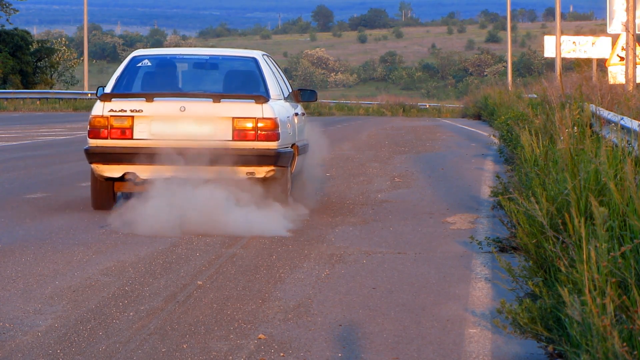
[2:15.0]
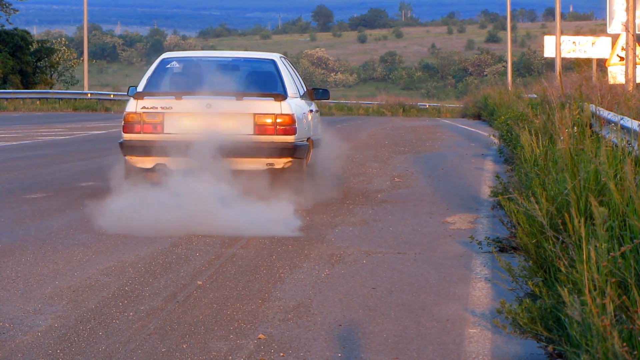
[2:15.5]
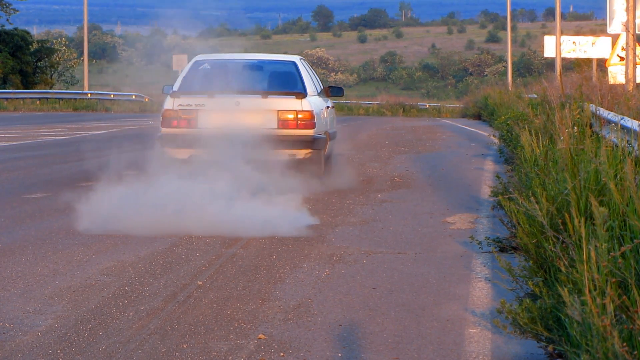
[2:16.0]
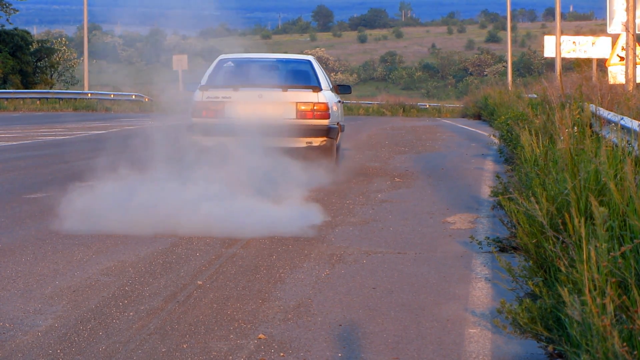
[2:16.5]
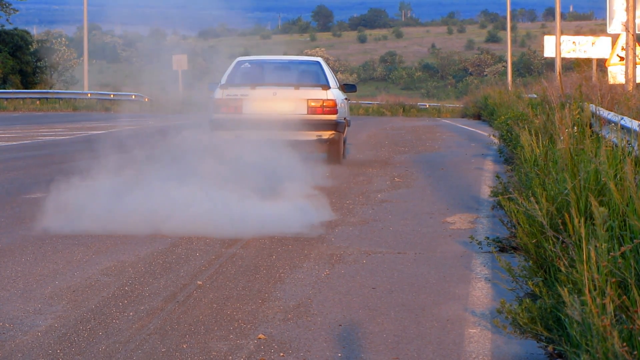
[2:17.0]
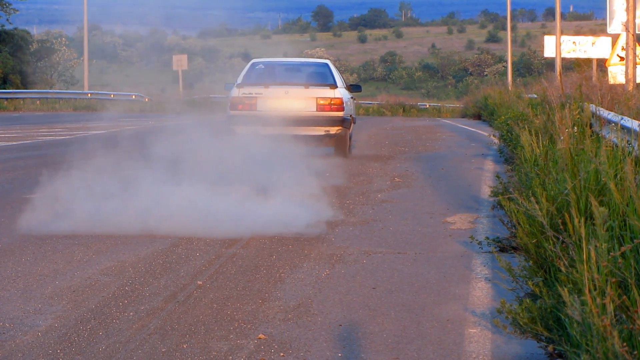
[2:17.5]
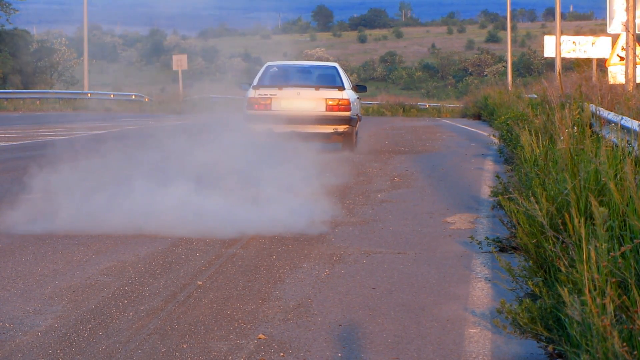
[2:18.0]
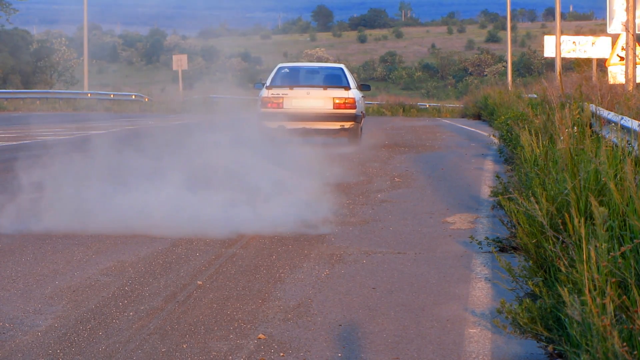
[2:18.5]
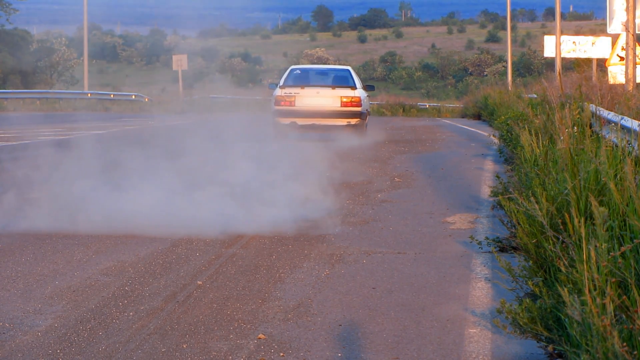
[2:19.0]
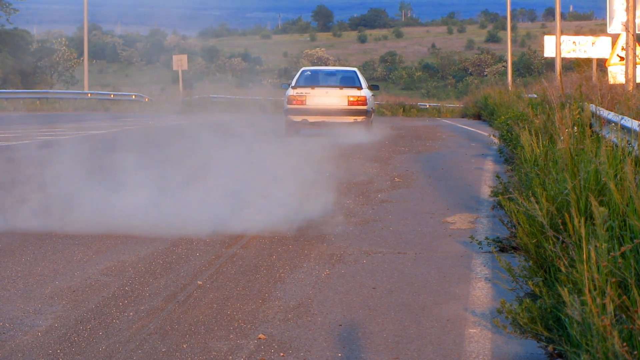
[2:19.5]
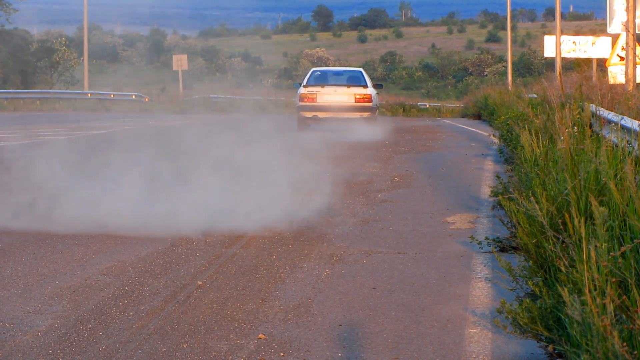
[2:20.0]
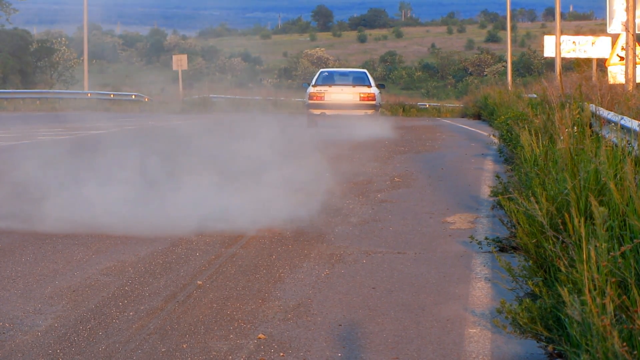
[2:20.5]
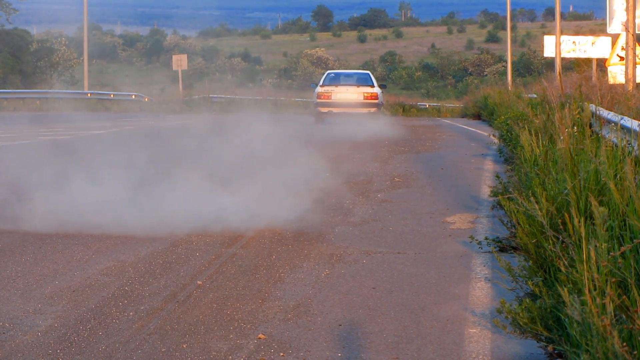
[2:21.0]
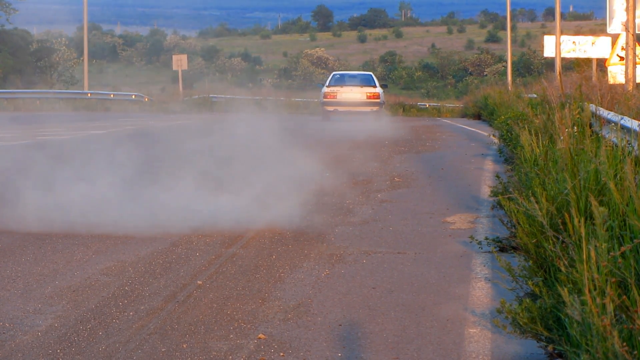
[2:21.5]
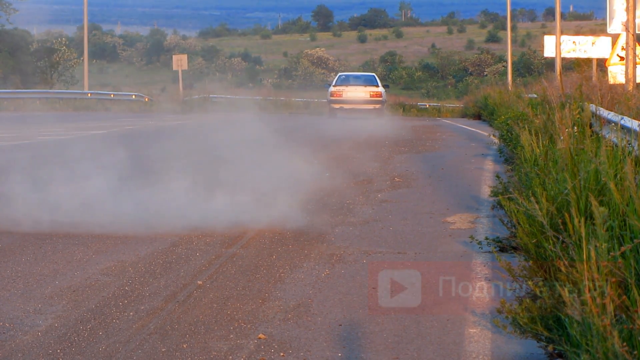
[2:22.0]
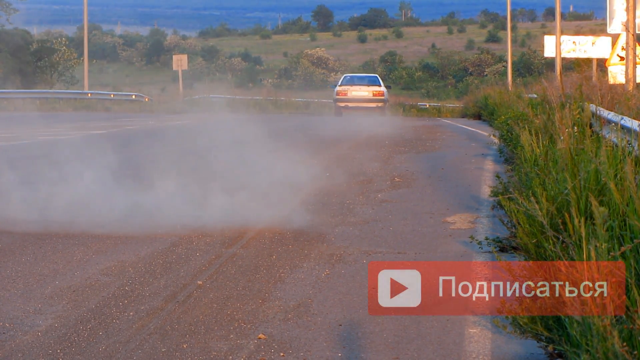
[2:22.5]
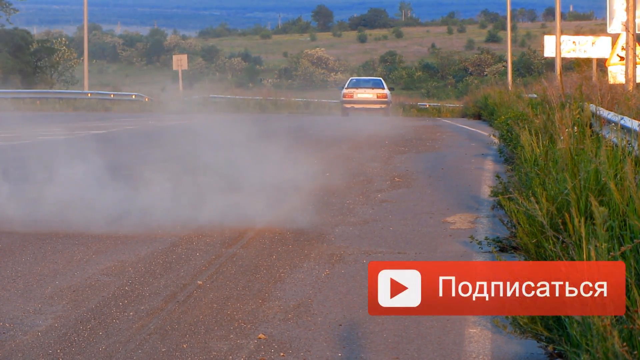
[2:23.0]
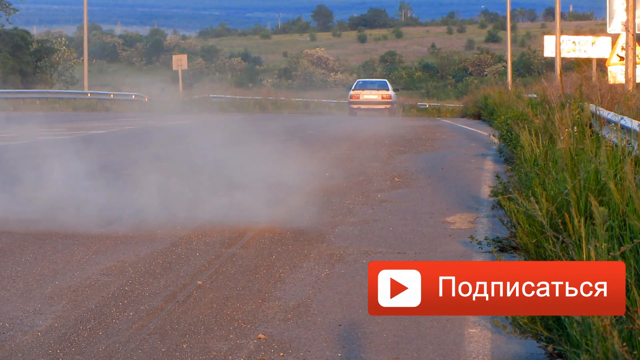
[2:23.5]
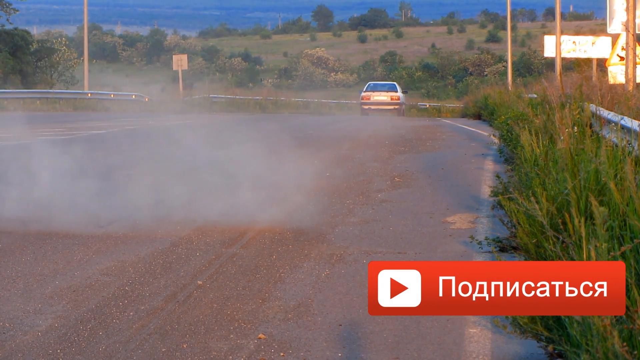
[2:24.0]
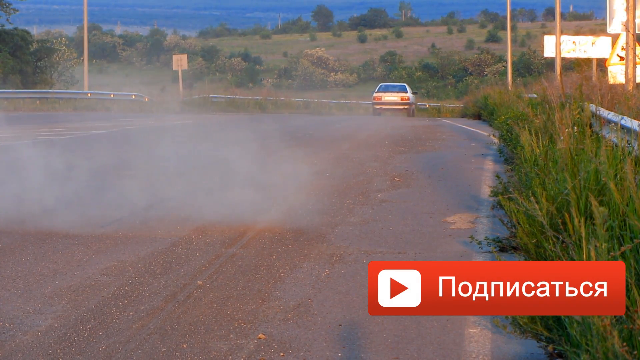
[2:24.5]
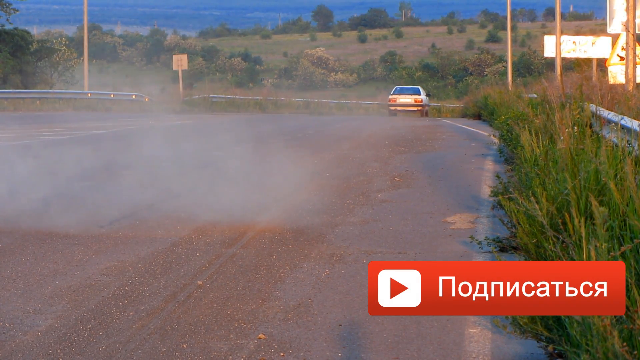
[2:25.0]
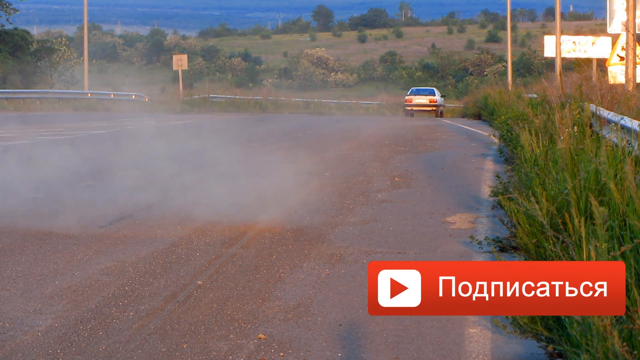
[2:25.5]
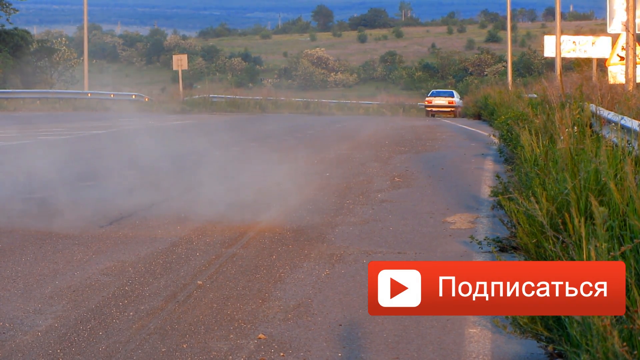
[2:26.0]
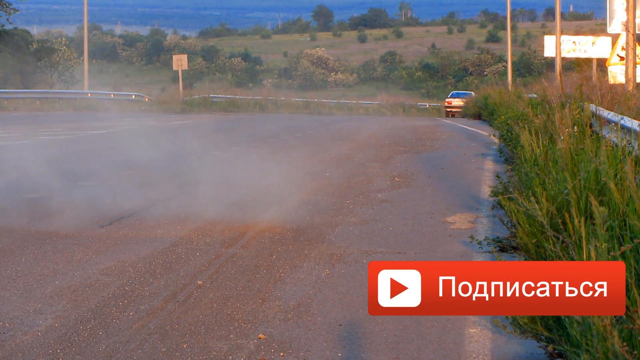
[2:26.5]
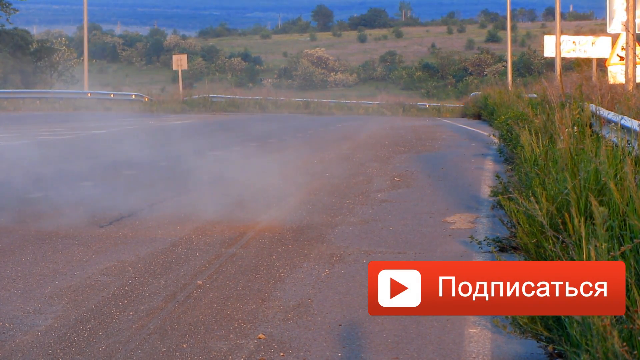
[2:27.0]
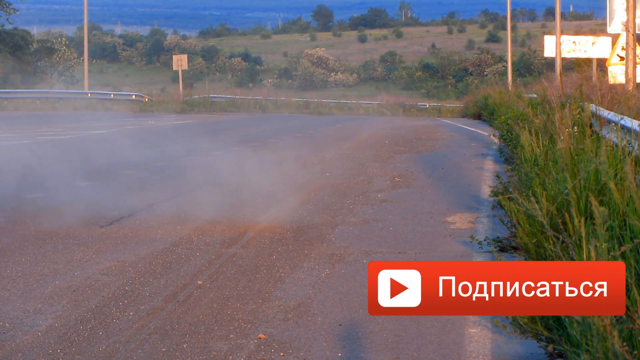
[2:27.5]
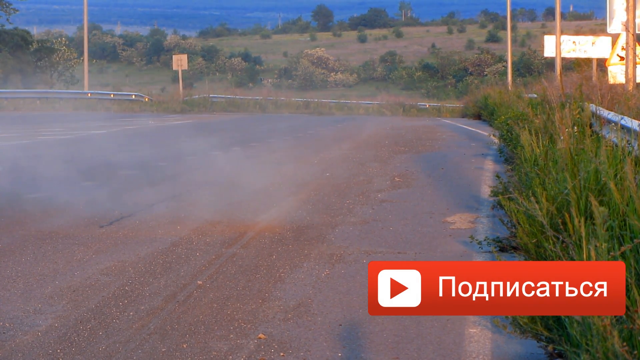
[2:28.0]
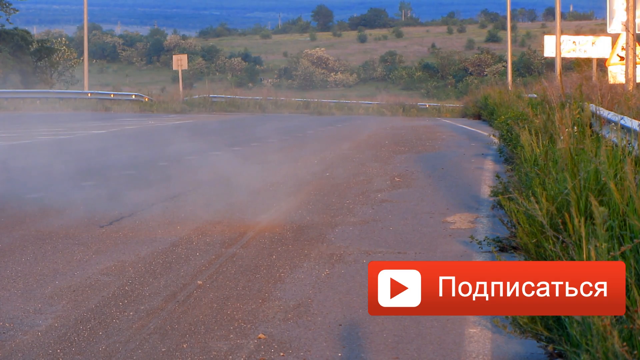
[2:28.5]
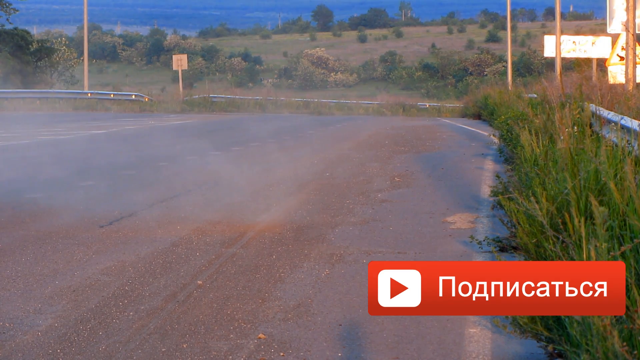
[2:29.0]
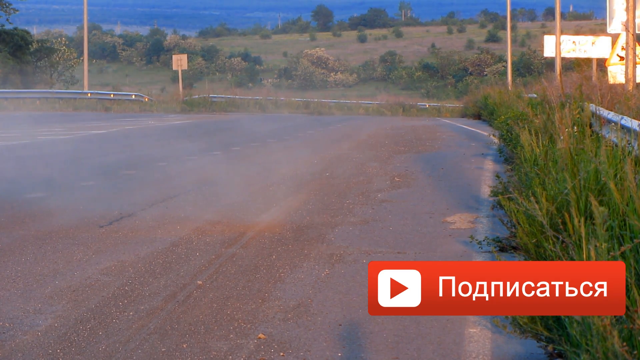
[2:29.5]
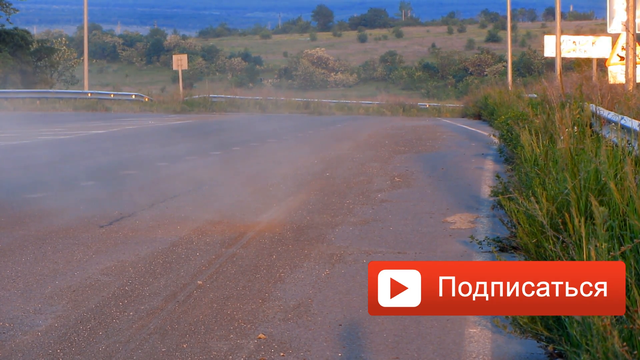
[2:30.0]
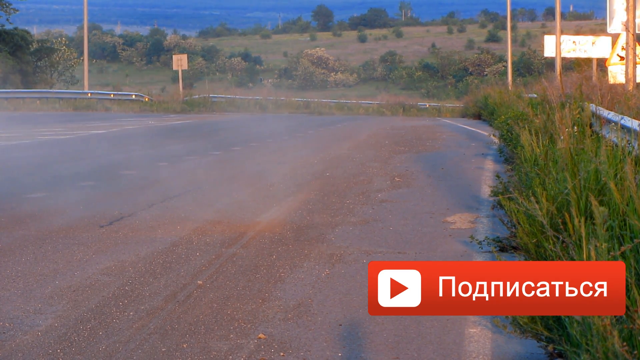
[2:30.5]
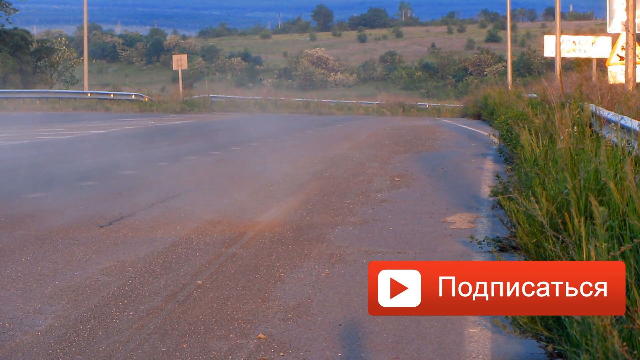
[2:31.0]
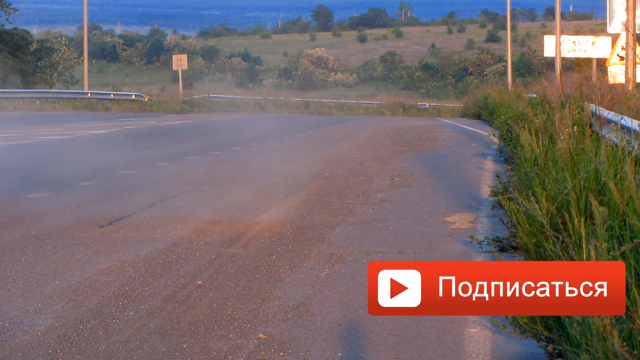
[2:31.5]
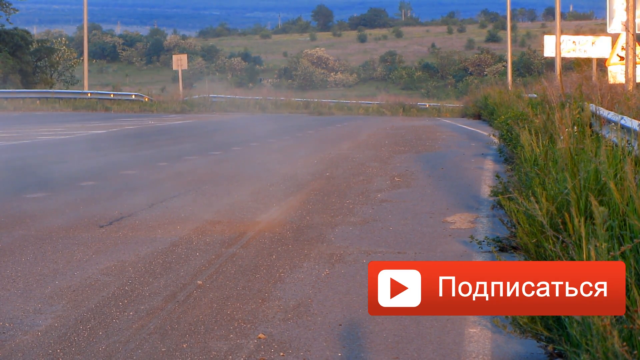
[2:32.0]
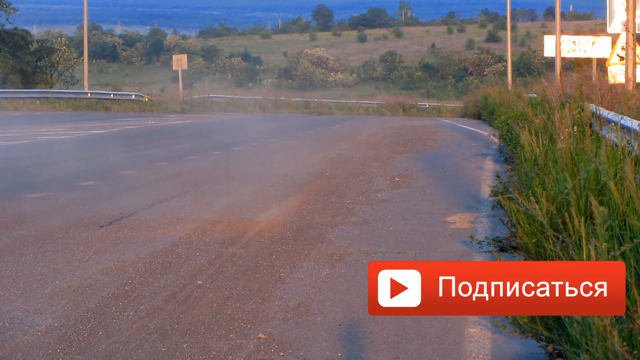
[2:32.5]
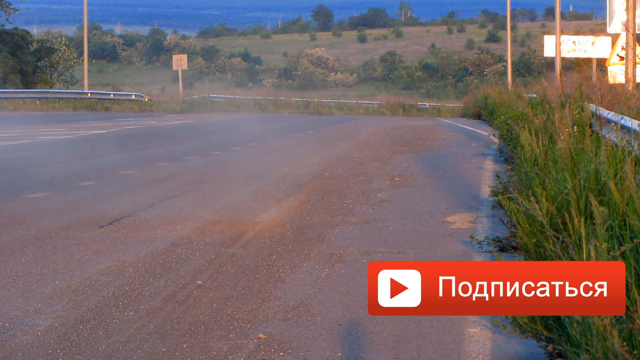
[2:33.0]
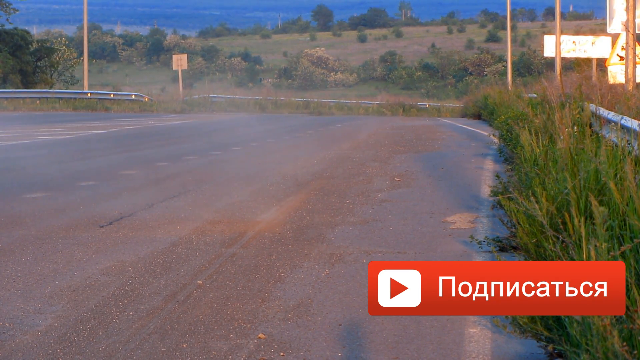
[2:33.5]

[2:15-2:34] The car drives down the road spewing a lot of white smoke from the tailpipe, and as it moves farther away the smoke becomes less and less. Once the car is out of sight, four images of additional videos pop up, which mostly appear to be related to car repairs or mechanical things. The area has a vast blue sky with a few clouds, and there are a lot of scrub brushes beside the paved road, which has a white line down the middle. There are signs on both sides of the road, with their backs visible, but the four pop-up videos prevent them from being fully seen.